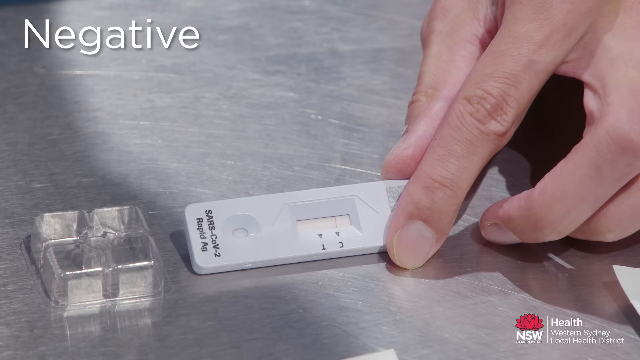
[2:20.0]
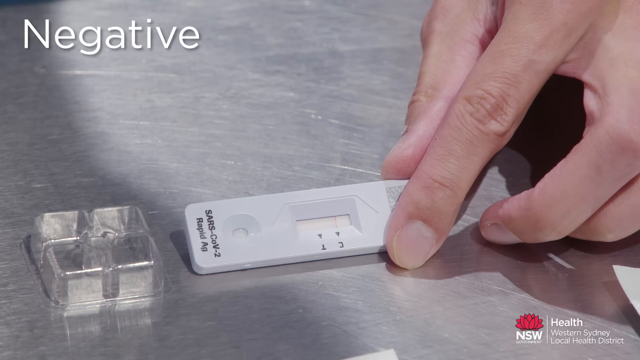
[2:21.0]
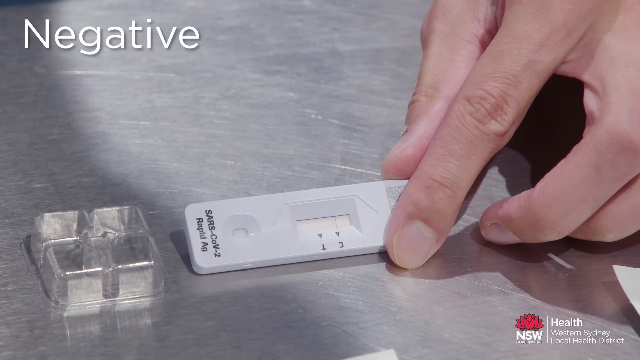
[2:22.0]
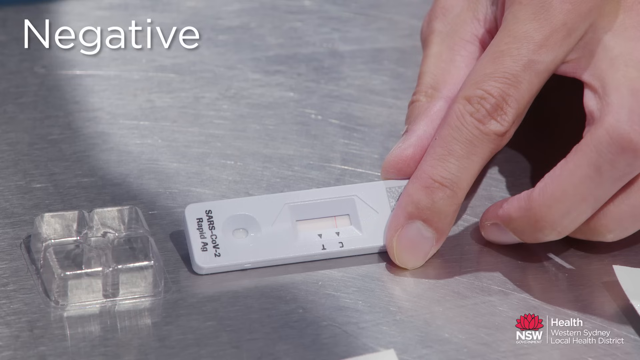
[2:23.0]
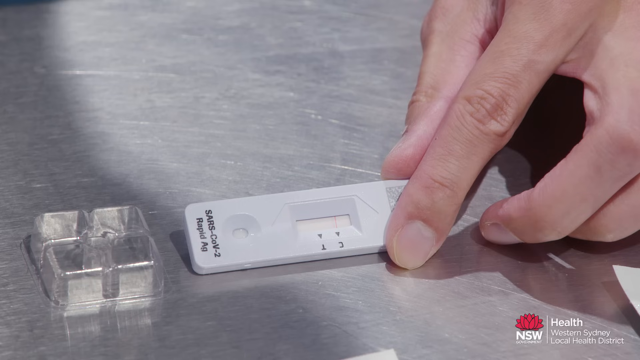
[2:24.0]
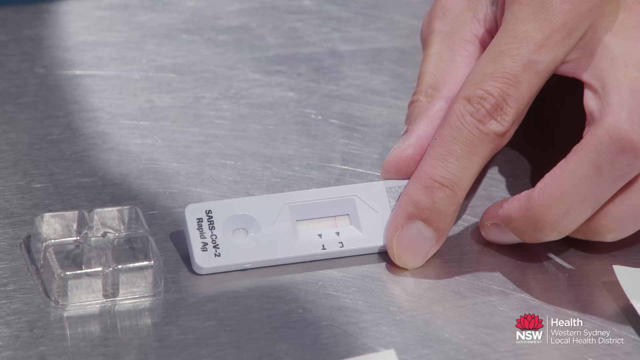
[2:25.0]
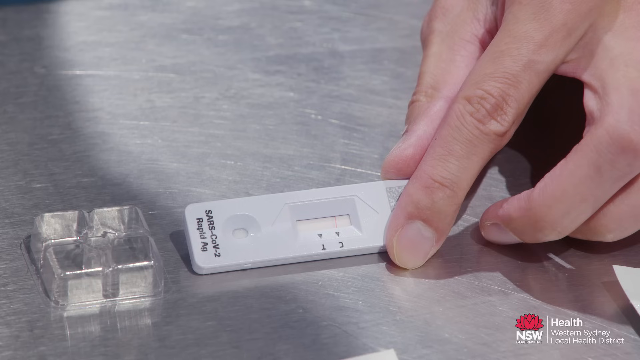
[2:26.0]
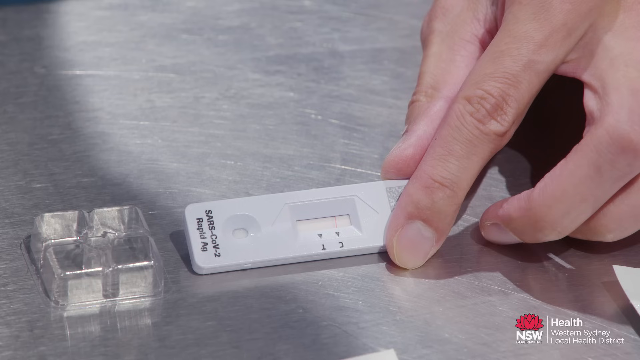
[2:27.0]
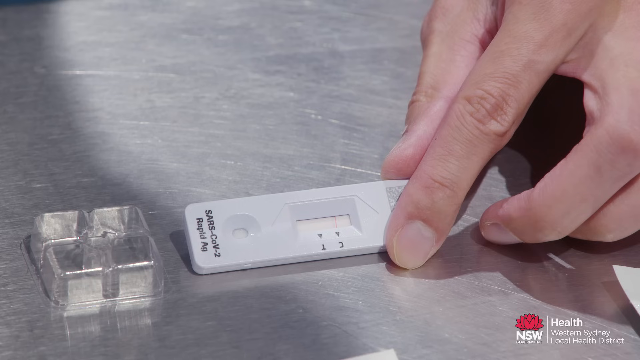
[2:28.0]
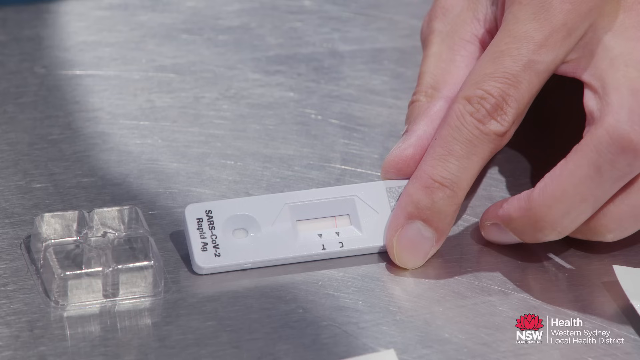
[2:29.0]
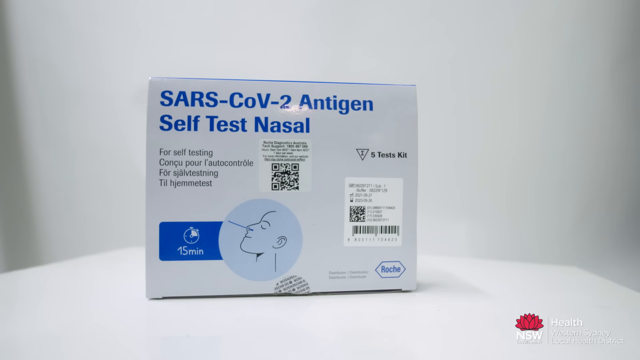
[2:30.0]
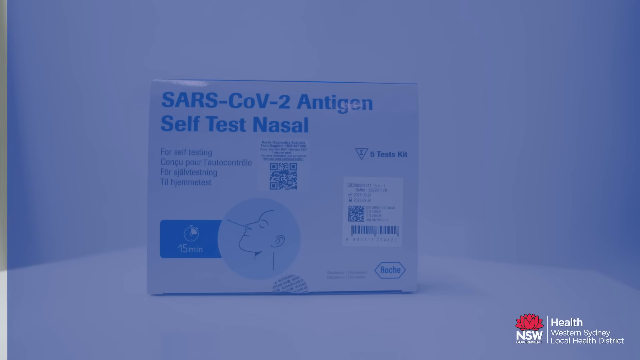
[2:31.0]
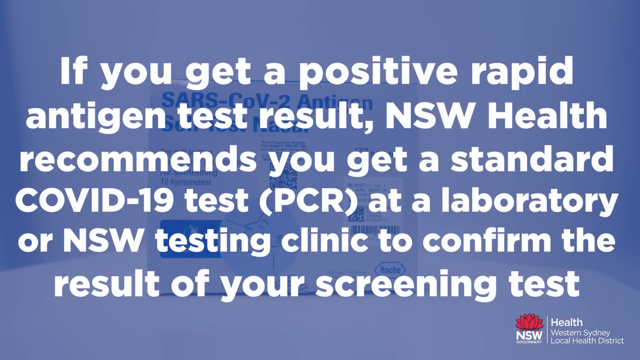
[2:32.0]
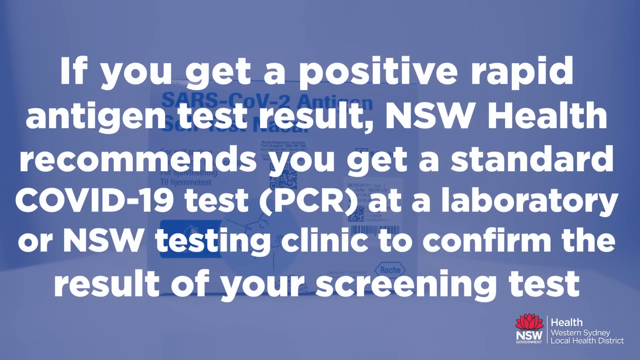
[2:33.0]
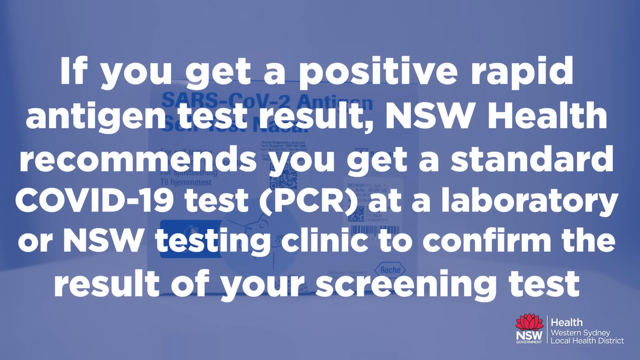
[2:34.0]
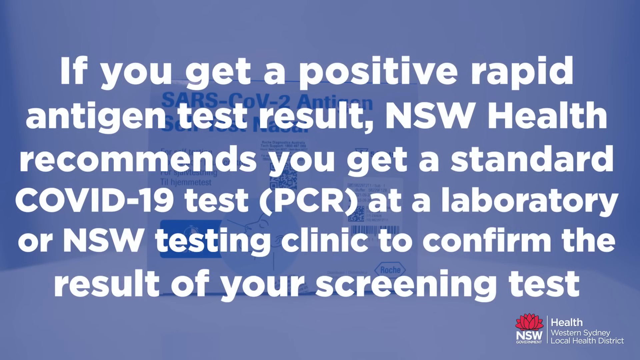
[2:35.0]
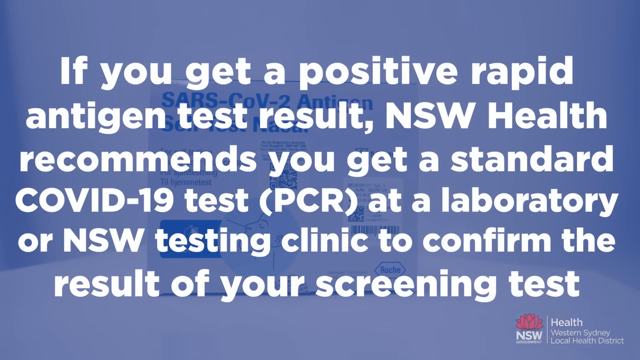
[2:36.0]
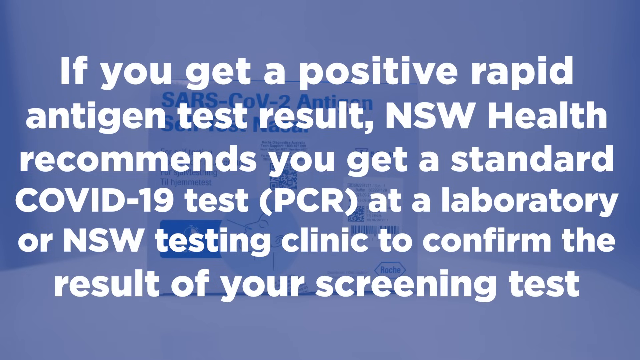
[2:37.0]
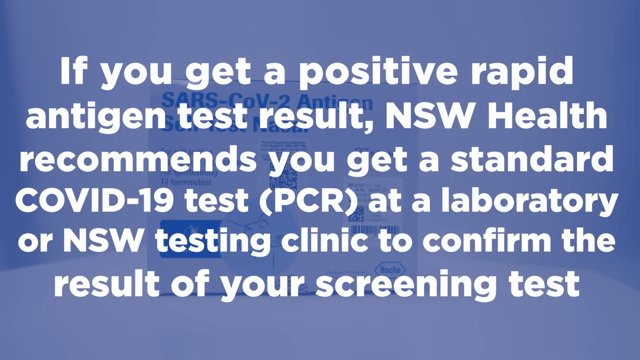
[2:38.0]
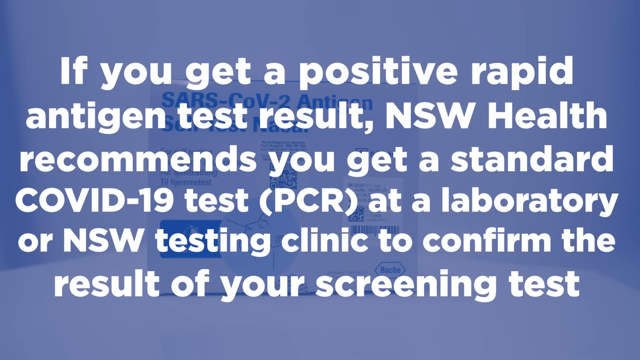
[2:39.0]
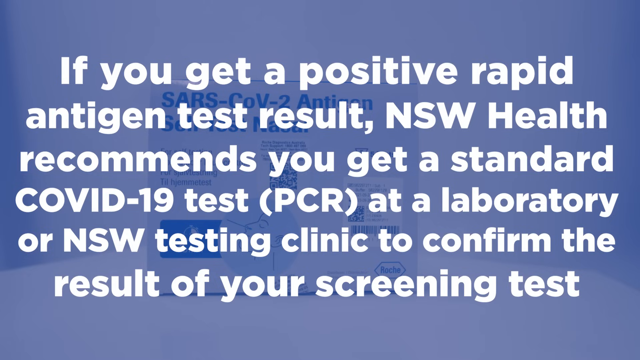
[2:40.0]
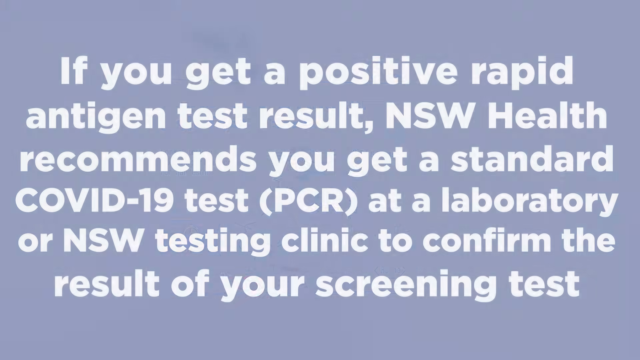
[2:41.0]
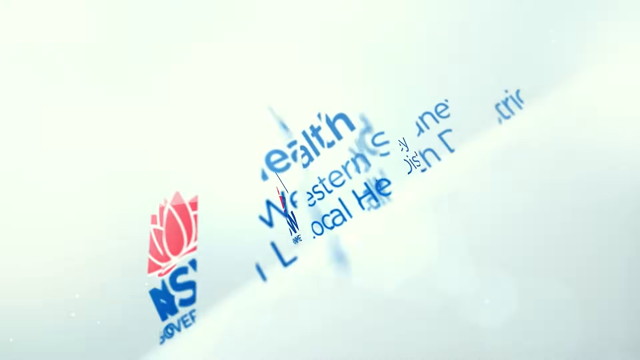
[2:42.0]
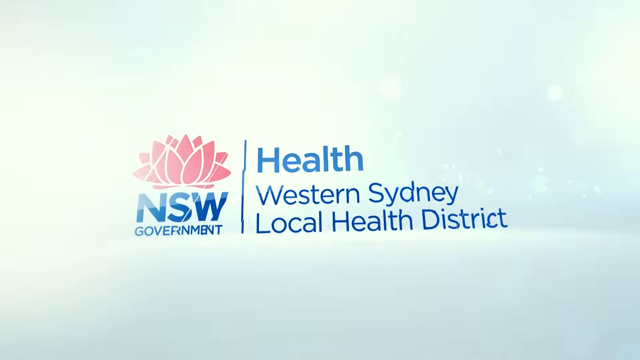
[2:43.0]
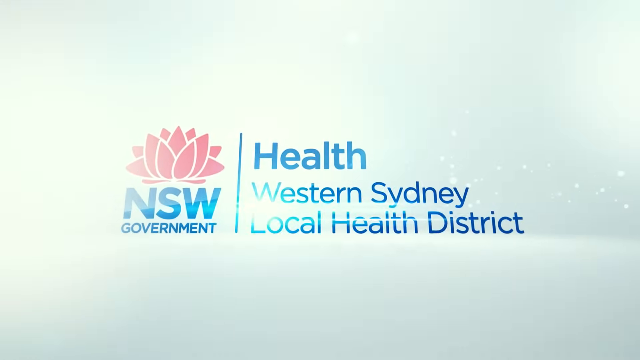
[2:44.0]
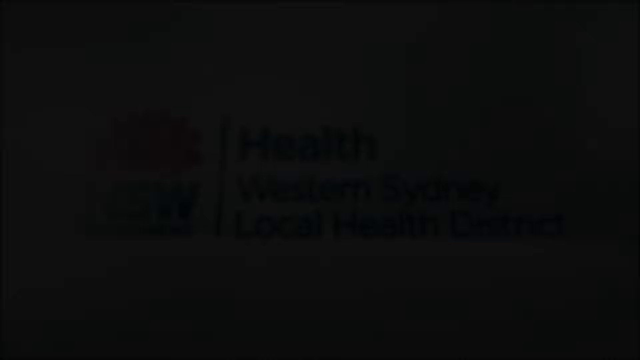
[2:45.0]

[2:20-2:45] A person holds a SARS test between their index finger and thumb on a metal table, tilting it slightly forward. A clear plastic stand is next to it. The testing strip is marked with two letters, C and T, and there is a pale line across by the C. A picture of the SARS-CoV-2 antigen tests then flashes up with text in white font on a blue background: "if you get a positive rapid antigen test result, NSW Health recommends you get a standard COVID-19 test PCR at a laboratory or NSW testing clinic to confirm the result of your screening test." After that, "NSW Government Health Western Sydney Local Health District" flashes up, a logo with a pale green background and dark blue font.